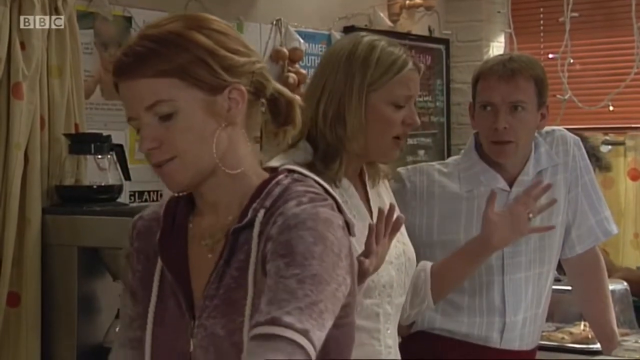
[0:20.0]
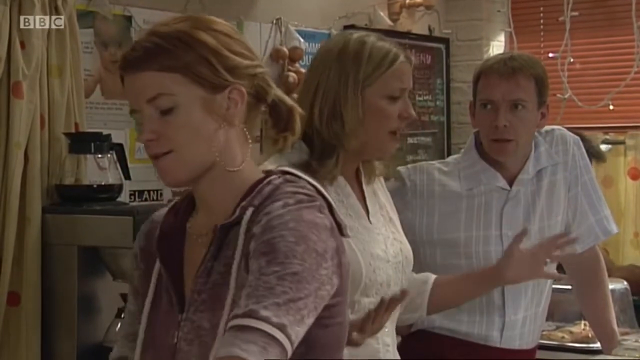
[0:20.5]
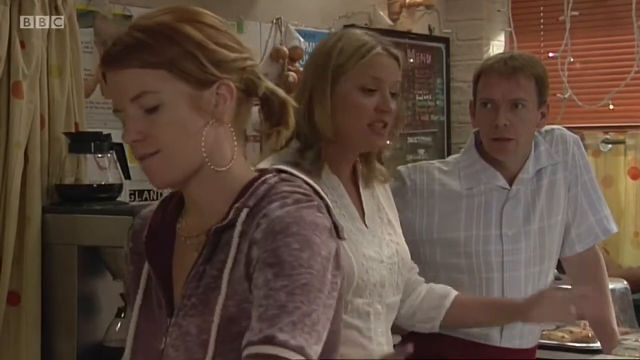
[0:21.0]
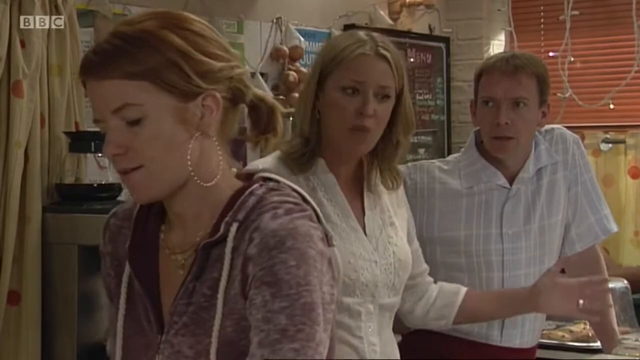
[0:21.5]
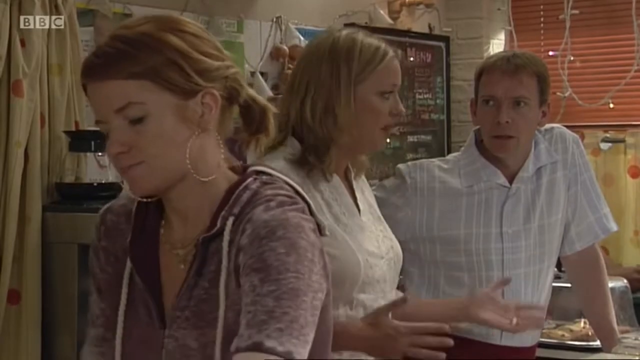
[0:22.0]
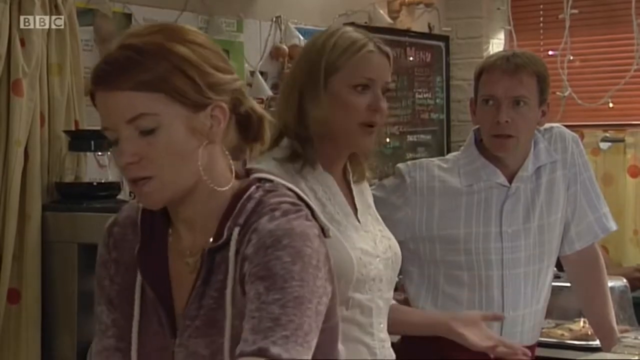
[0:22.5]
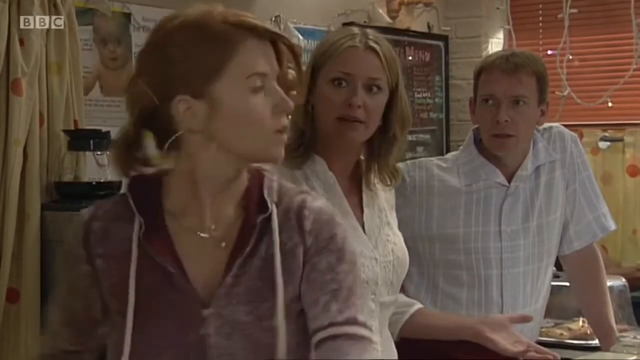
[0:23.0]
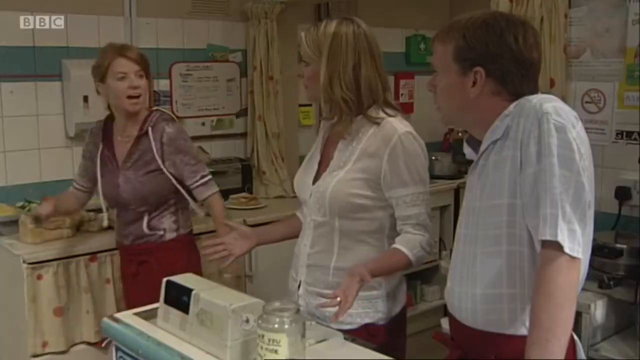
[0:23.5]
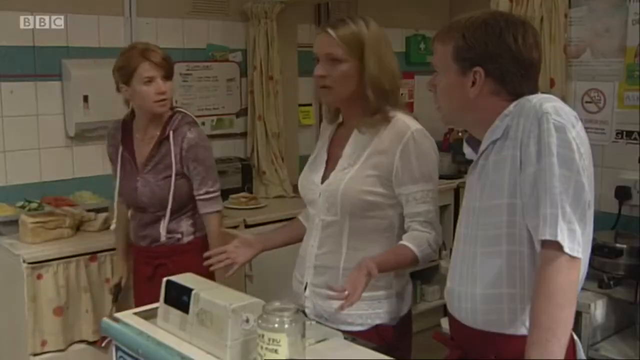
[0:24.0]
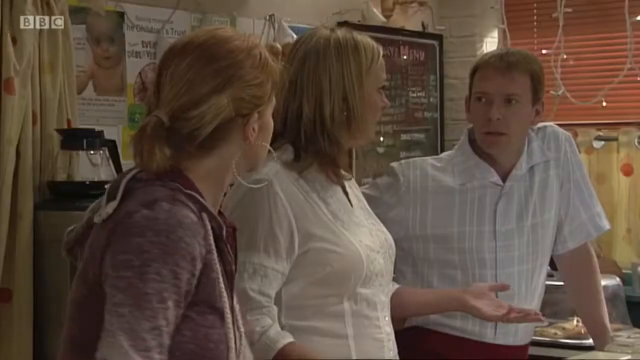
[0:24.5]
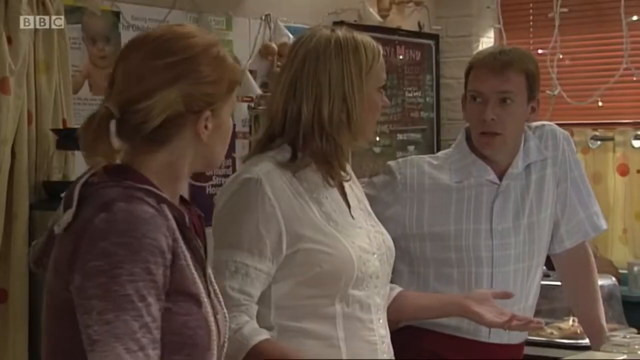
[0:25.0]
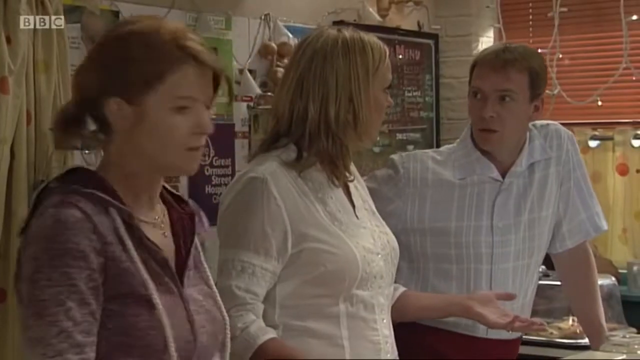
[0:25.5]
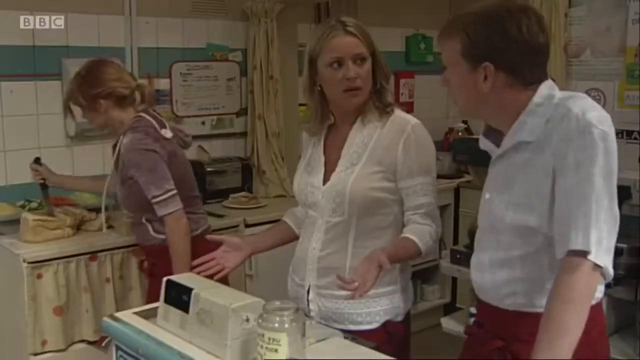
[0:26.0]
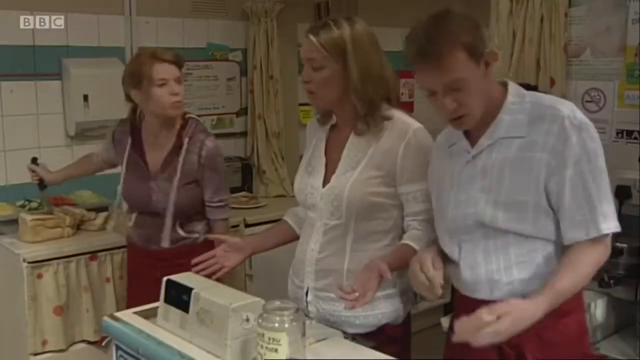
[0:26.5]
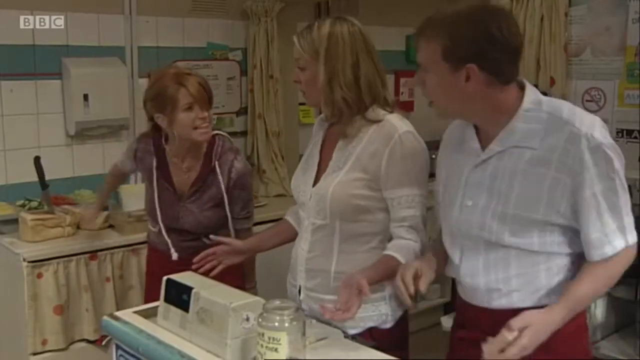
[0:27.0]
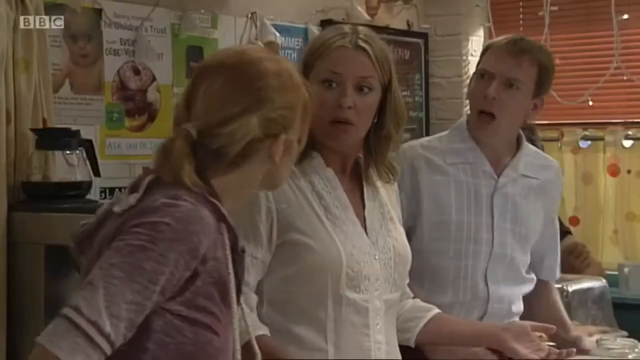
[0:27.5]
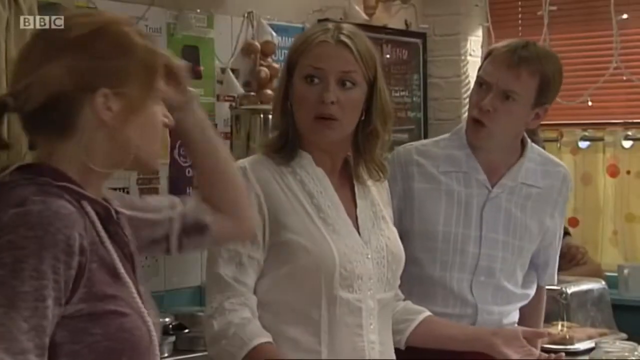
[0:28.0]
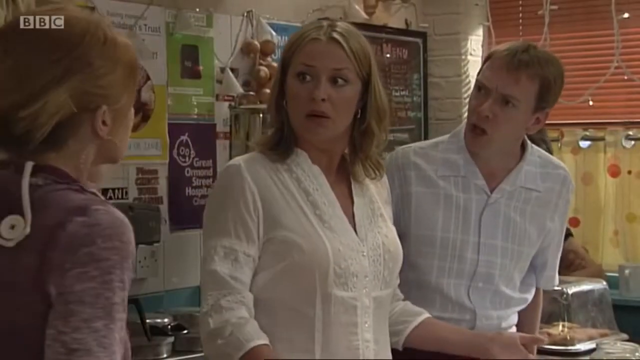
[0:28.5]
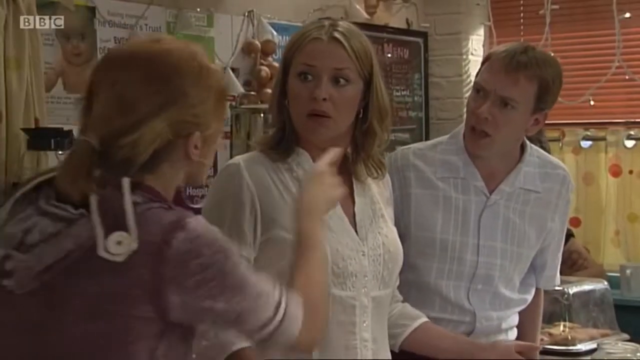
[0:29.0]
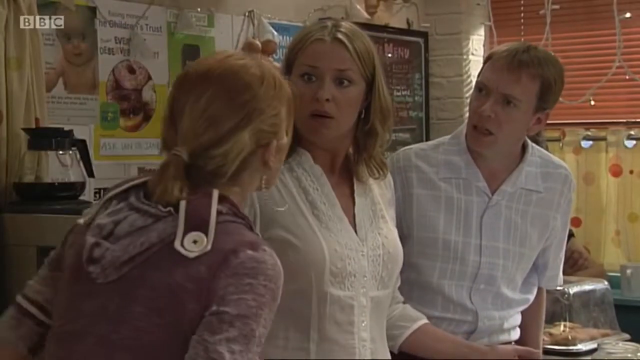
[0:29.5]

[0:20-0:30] The scene, like a show, is set in the kitchen, with the BBC logo still in the top left. Three main characters are visible, with one more person behind. The woman is still slicing the bread. At the back there is a curtain, and near the curtain is a kettle. The woman in the middle wears a white top, and the man wears a white T-shirt. The woman in the middle talks, then the woman slicing the bread stops, looks at the man and the woman, slams the bread with a knife and stabs it, showing she is angry. They keep talking and exchanging words, and it looks like they are arguing.